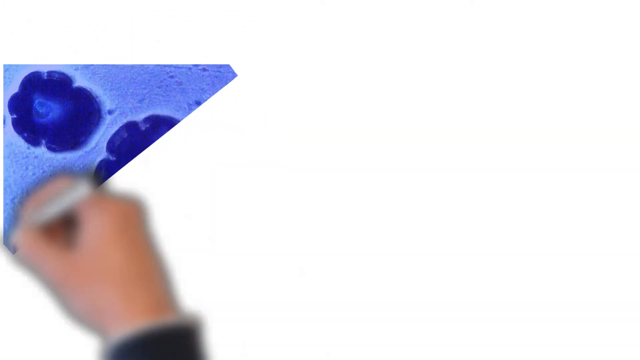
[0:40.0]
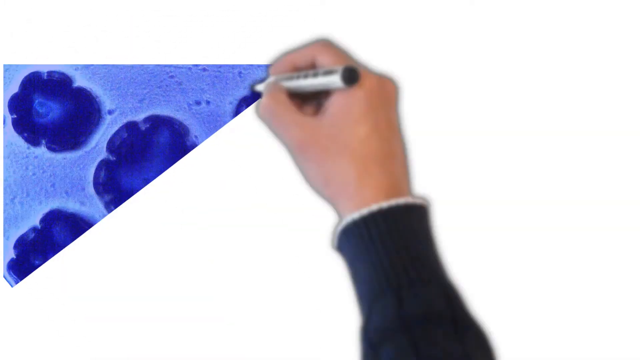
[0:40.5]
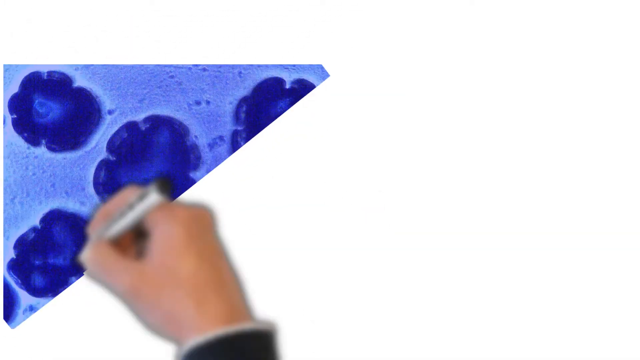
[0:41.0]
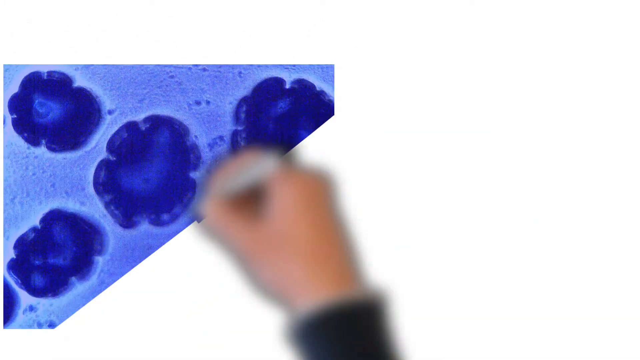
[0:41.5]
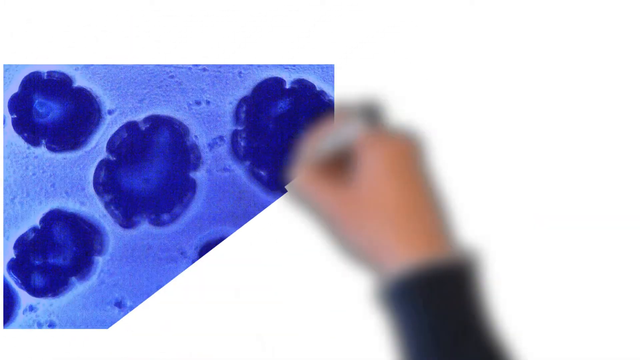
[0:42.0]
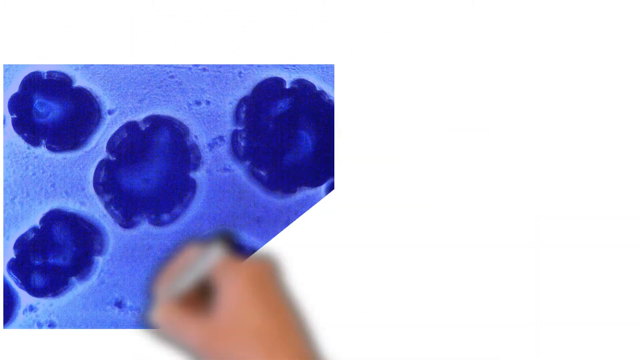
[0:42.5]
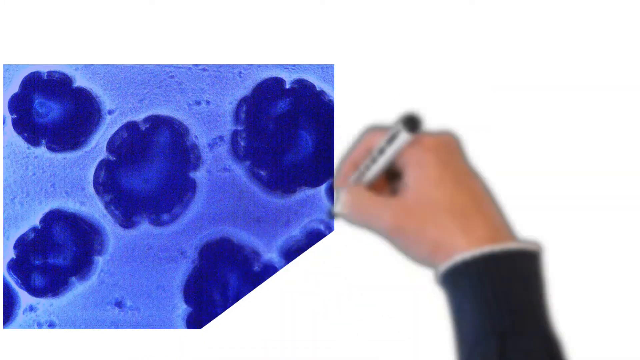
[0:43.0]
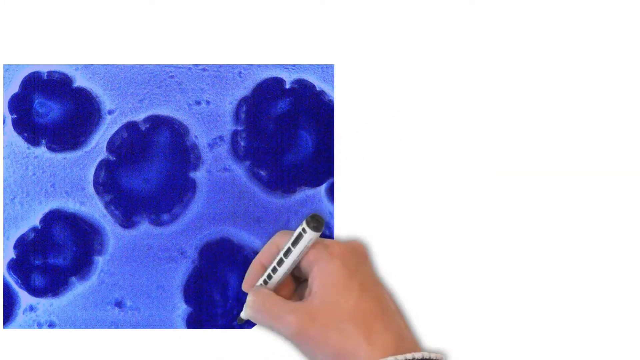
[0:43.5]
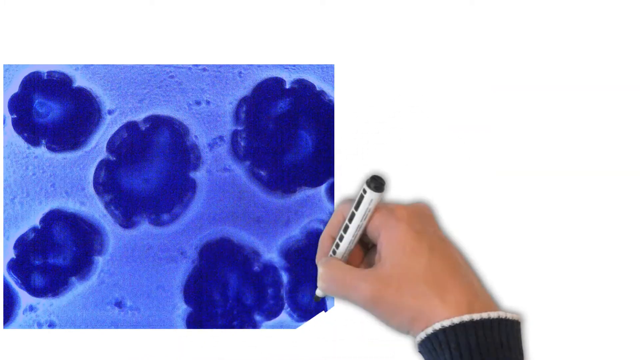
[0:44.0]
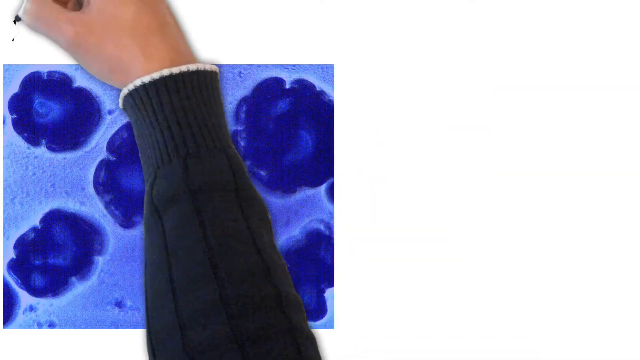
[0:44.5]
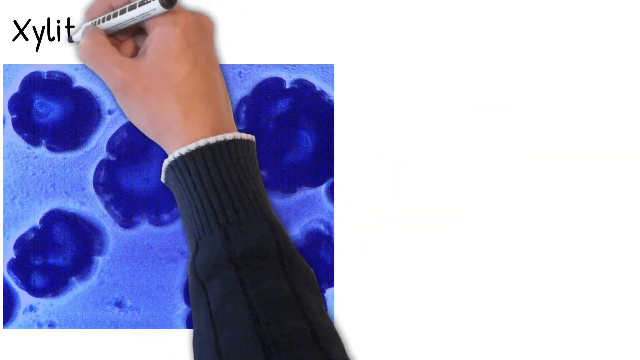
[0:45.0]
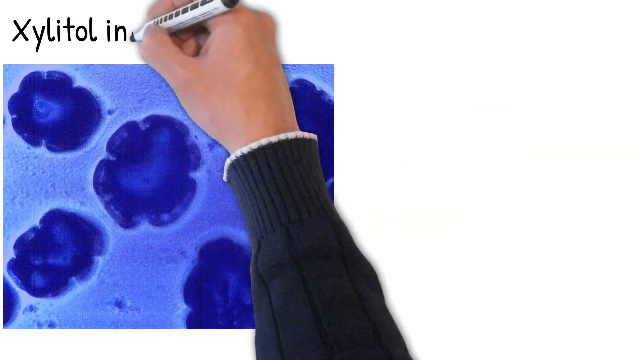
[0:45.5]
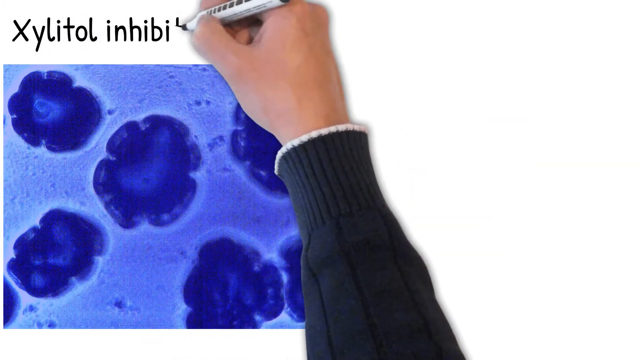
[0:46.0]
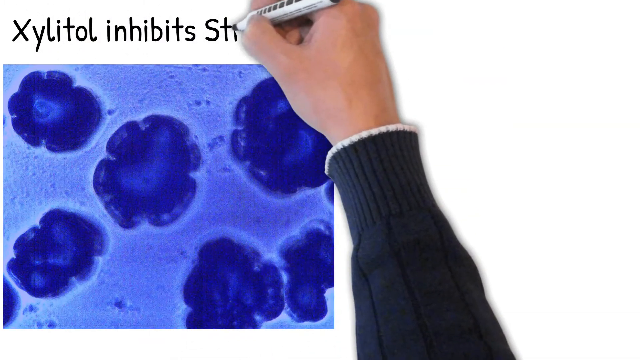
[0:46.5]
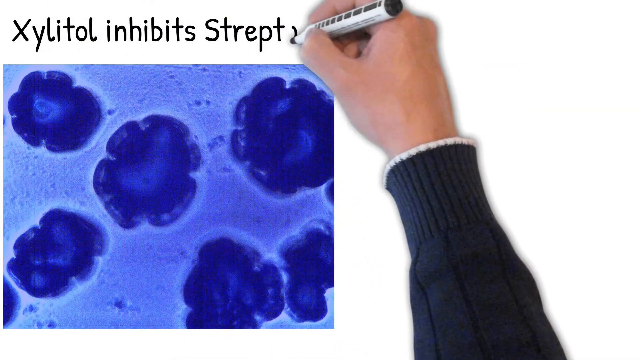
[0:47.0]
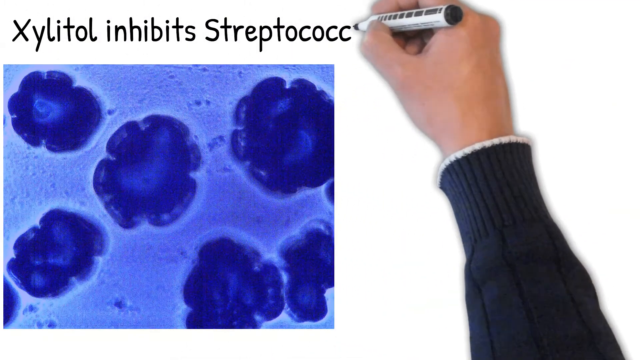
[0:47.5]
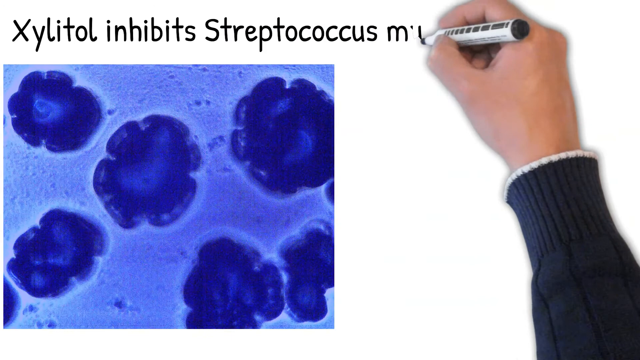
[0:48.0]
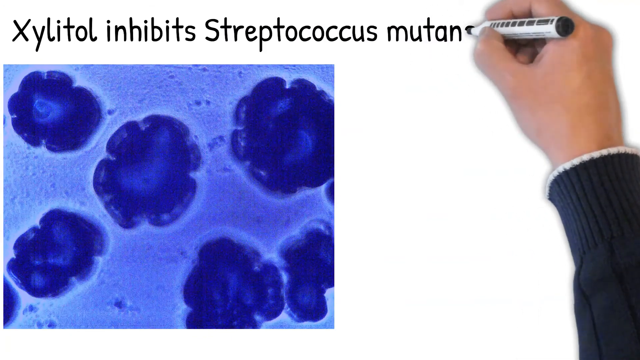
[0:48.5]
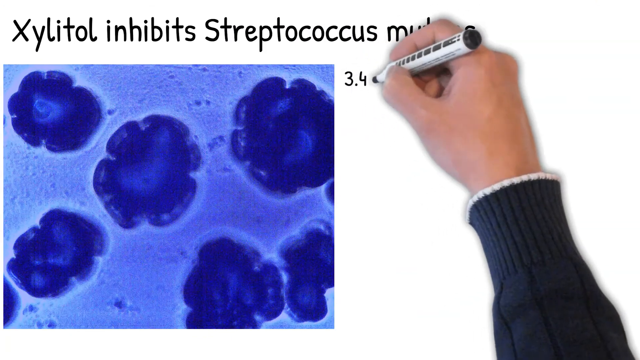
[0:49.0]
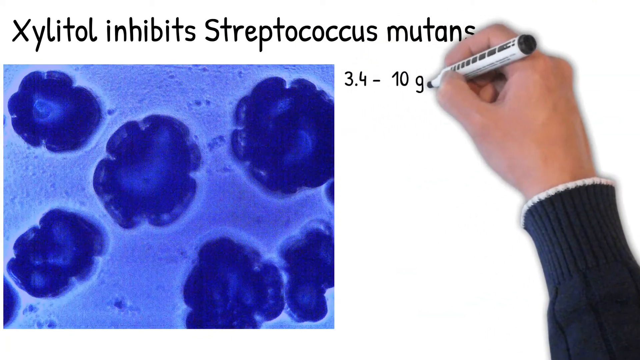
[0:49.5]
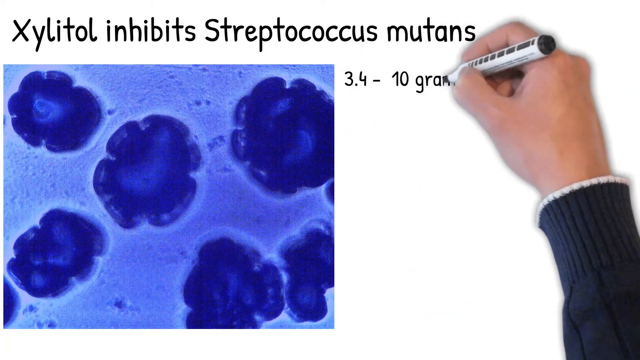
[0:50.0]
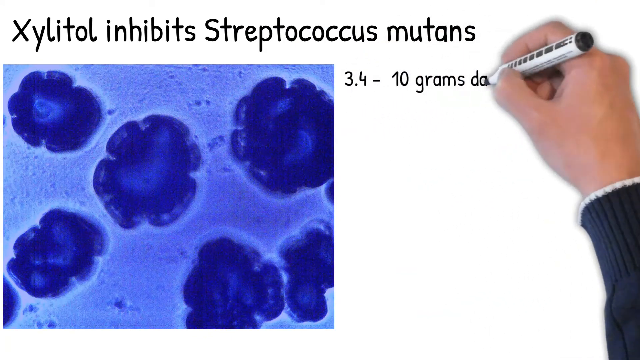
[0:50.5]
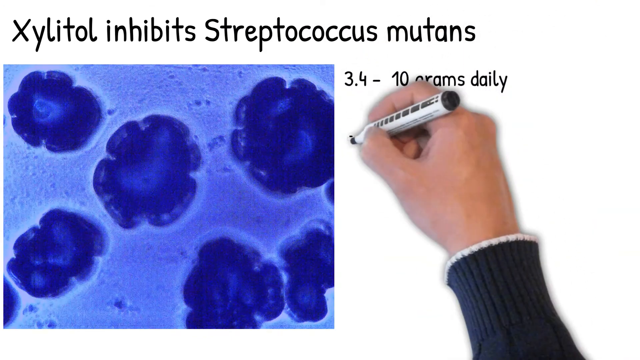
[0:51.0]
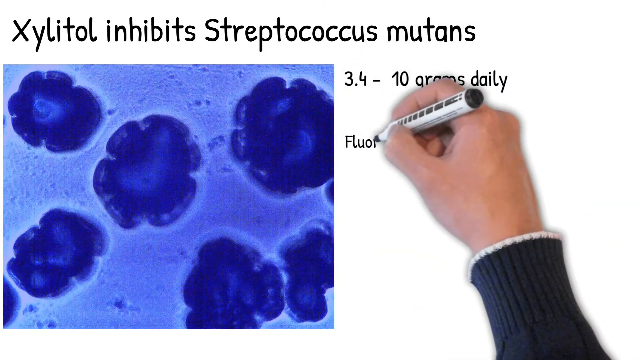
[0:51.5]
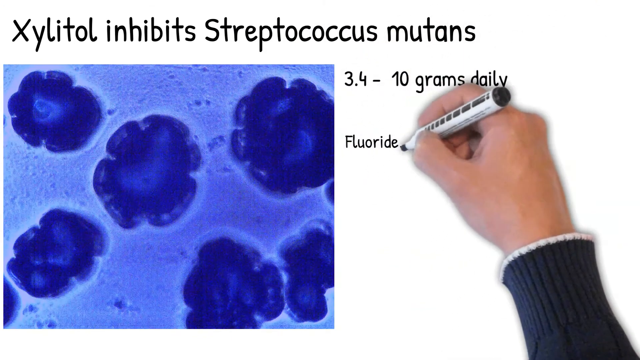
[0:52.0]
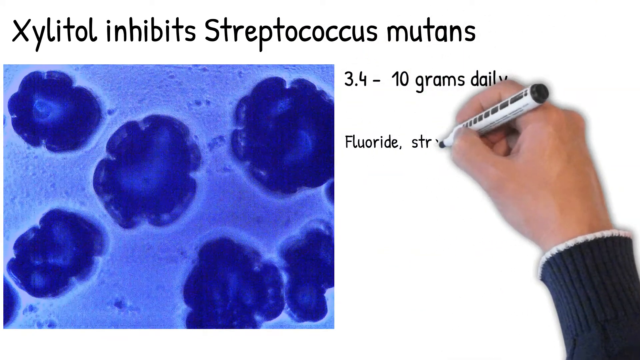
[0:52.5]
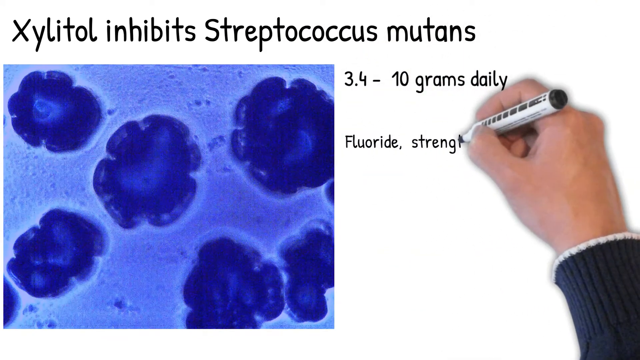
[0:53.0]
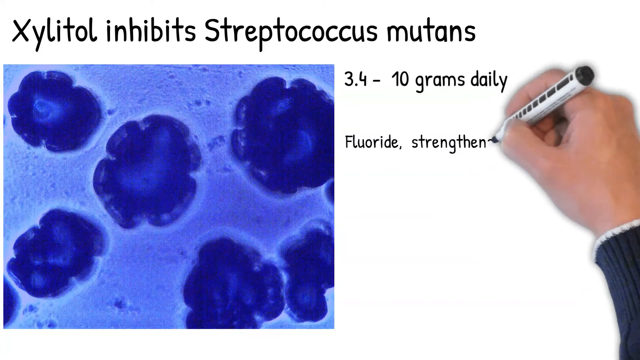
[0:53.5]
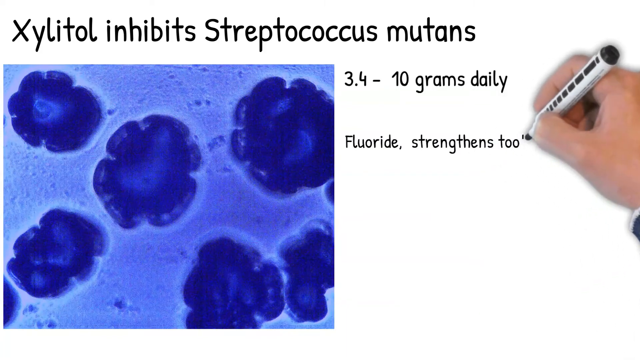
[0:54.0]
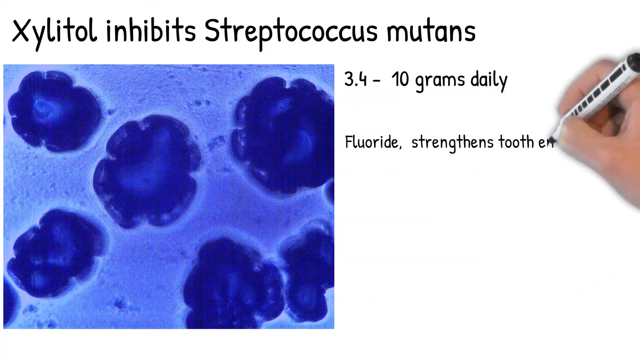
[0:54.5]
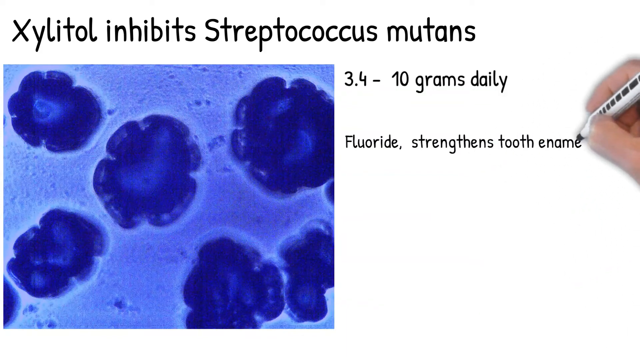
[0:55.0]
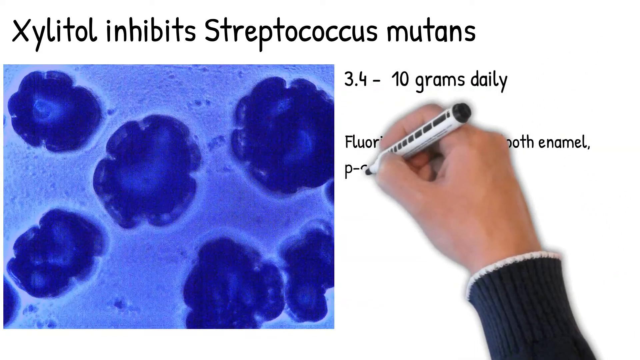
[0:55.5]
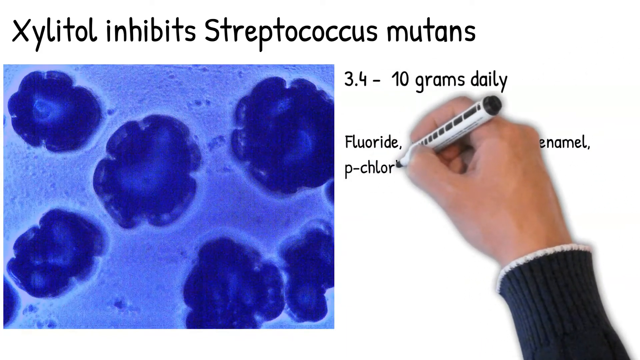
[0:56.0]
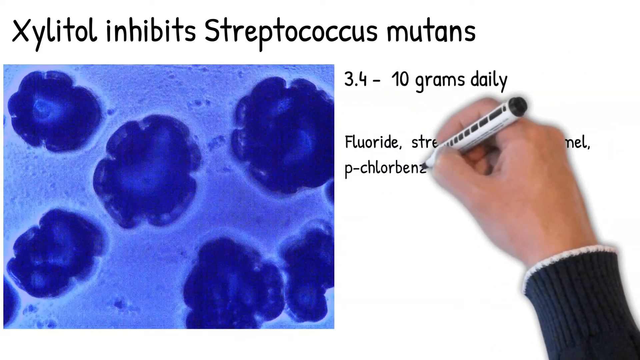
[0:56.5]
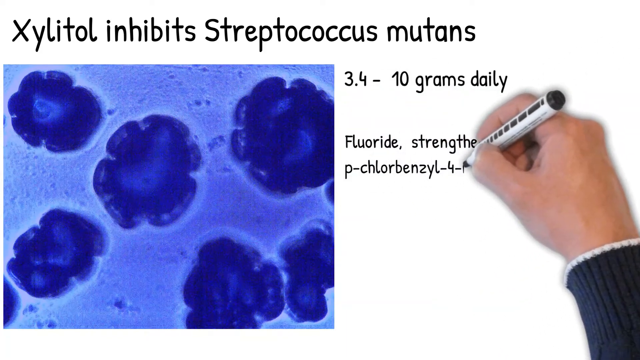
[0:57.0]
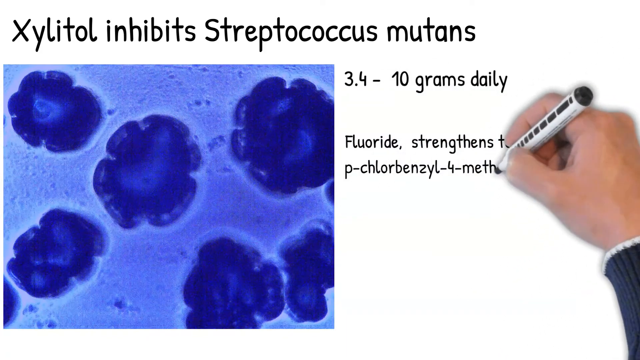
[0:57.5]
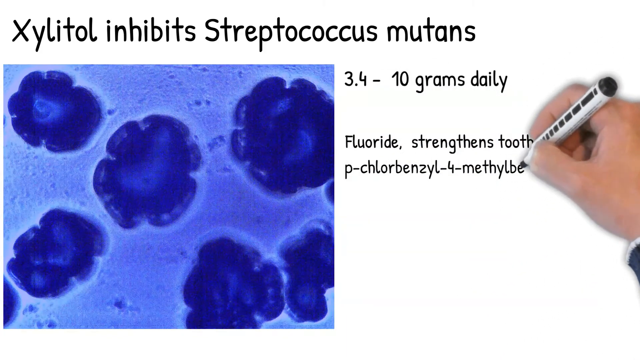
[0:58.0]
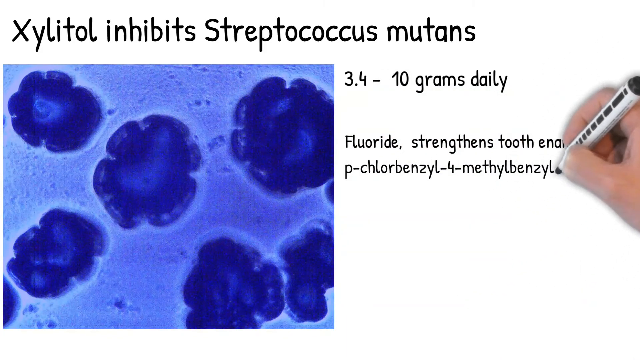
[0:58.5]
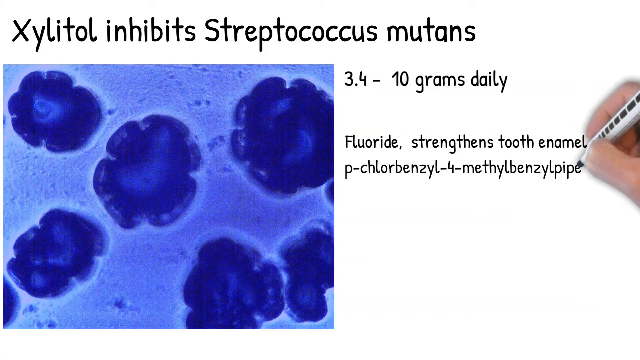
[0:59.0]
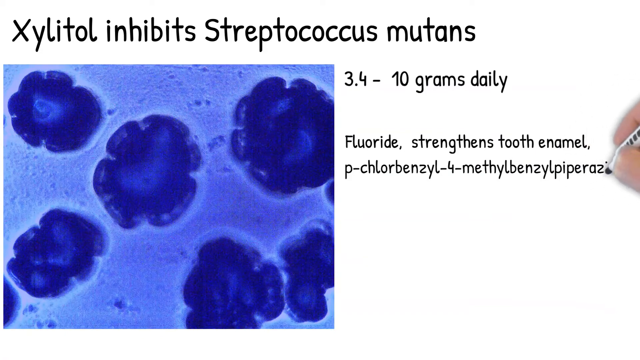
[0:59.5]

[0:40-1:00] As the hand continues scribbling, an image of some bacterium under a microscope appears, taking up the left-hand side of the image, with a white bar left at the top. The hand brings the pen to the white bar above the image and writes "Xylitol inhibits streptococcus mutans". Underneath, in smaller text to the right of the image, the hand writes "3.4-10 grams daily. Fluoride strengthens tooth enamel. P-chlorobenzyl-4-methylbenzylpiperazine." All of this text is in a small black handwritten-style font so that it looks as if the hand is writing it. The microscope image on the left shows six streptococcus stained blue: the background where the stain sits is light blue, the bacterium are dyed dark blue, and the organelles inside them are stained a slightly lighter blue. Four are at the top and two are squished together at the bottom right-hand side of the image.